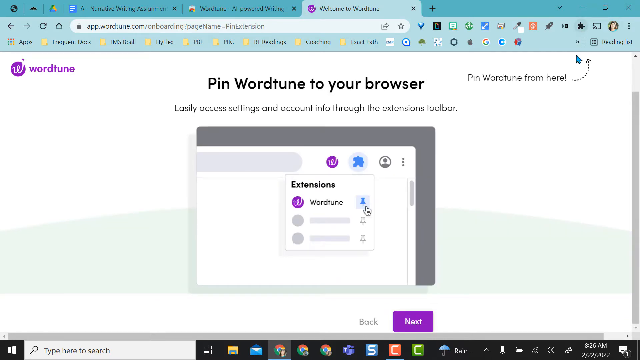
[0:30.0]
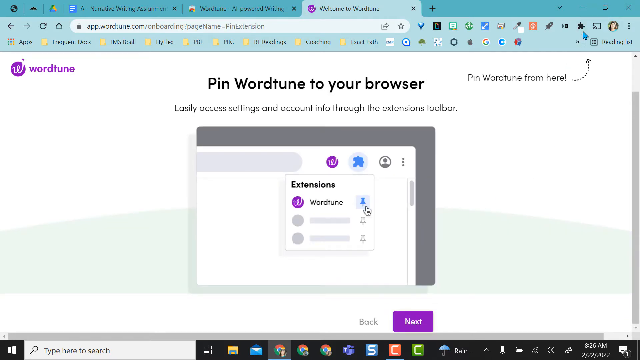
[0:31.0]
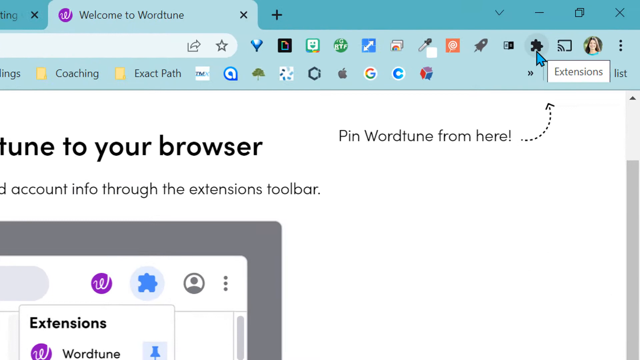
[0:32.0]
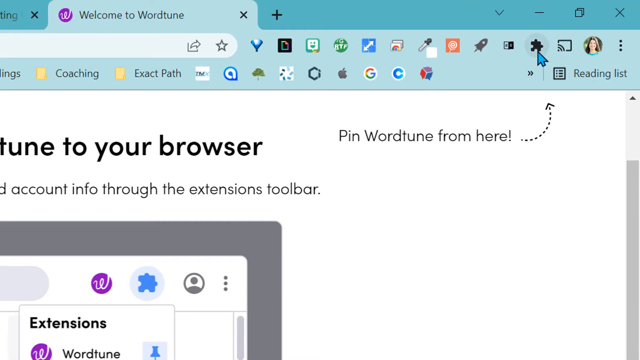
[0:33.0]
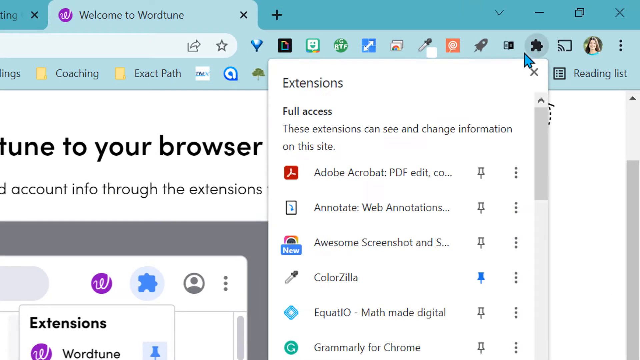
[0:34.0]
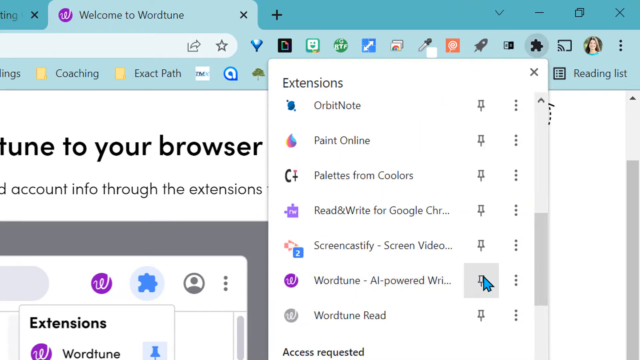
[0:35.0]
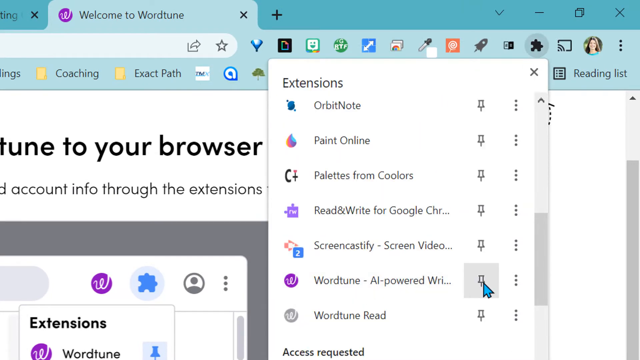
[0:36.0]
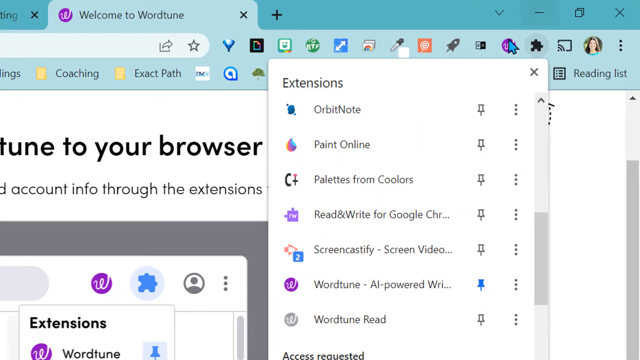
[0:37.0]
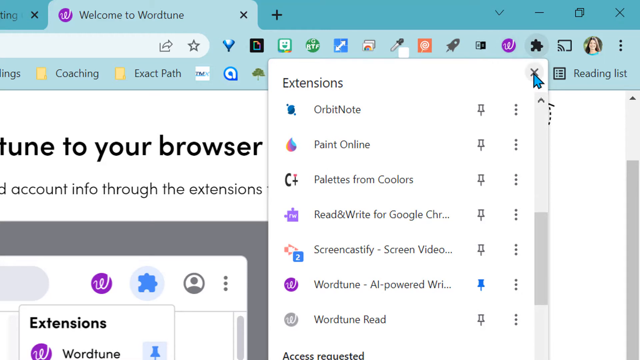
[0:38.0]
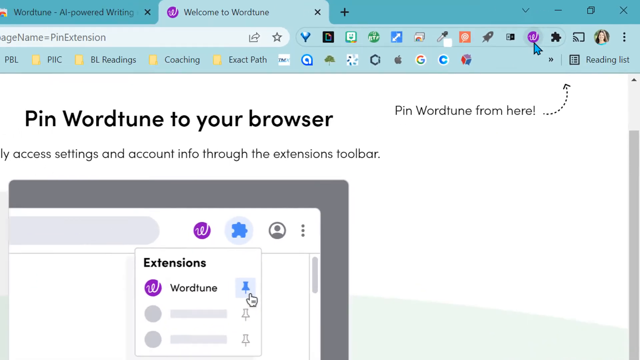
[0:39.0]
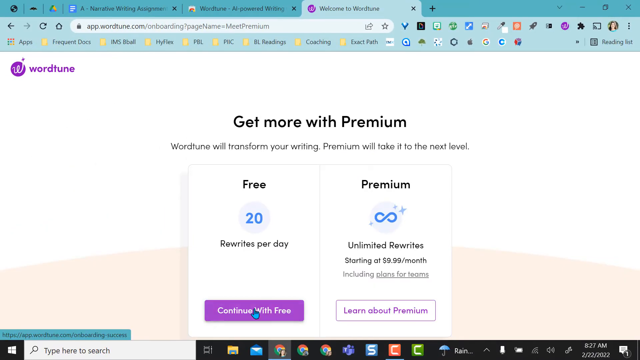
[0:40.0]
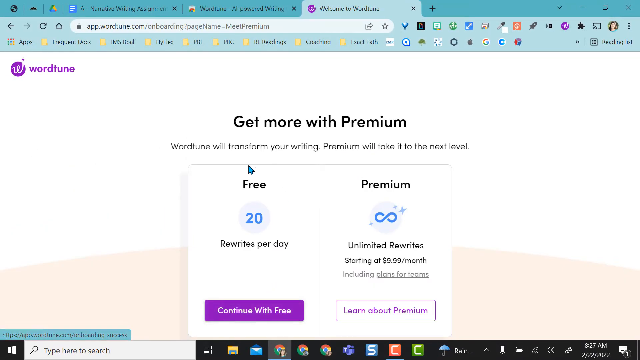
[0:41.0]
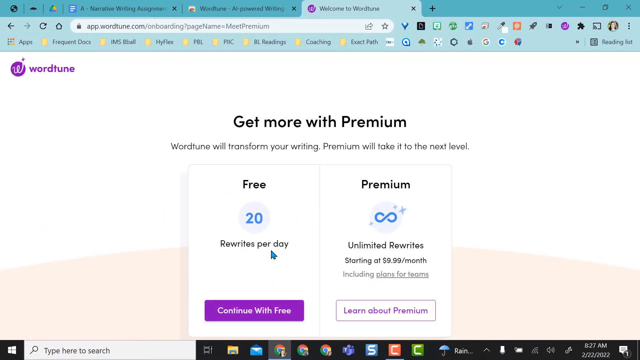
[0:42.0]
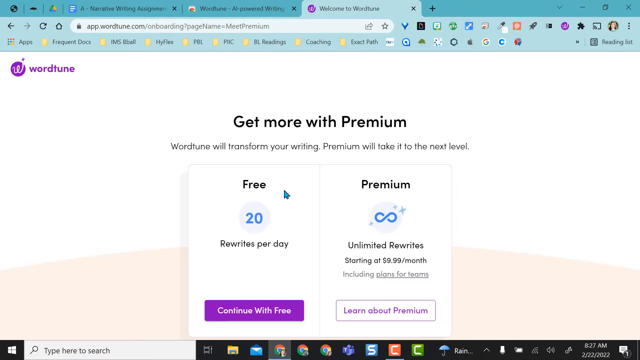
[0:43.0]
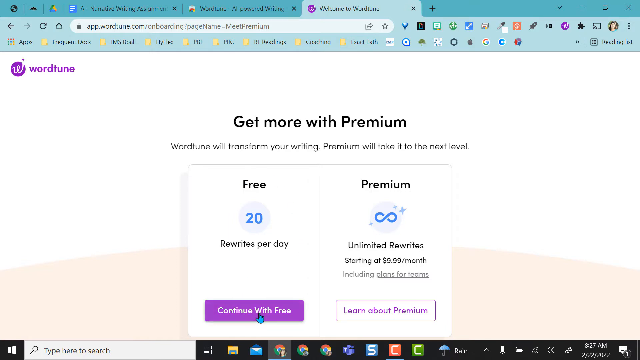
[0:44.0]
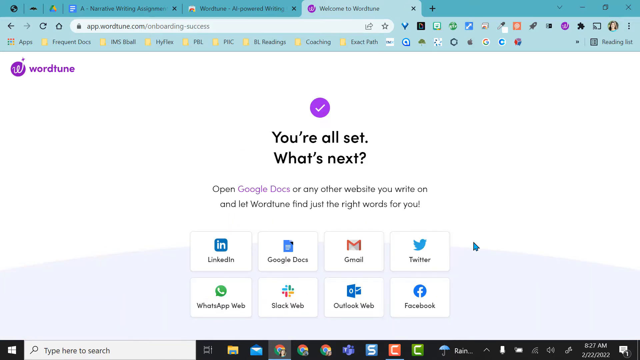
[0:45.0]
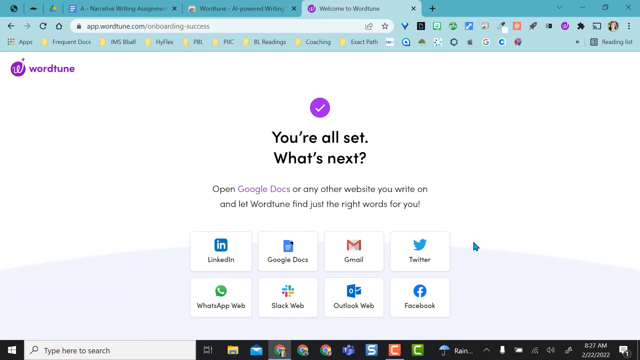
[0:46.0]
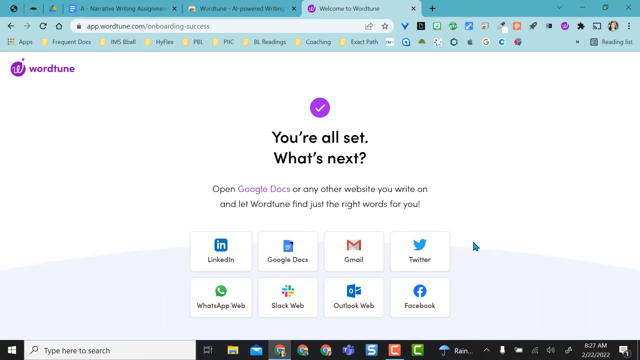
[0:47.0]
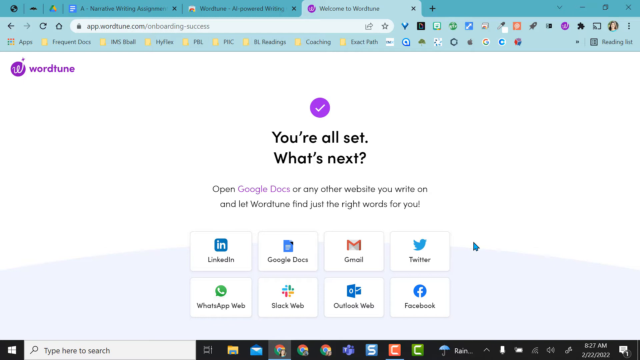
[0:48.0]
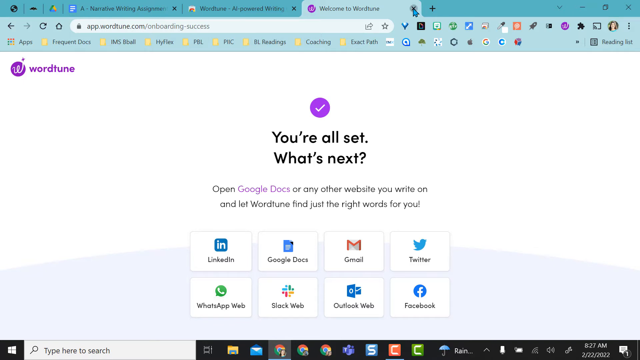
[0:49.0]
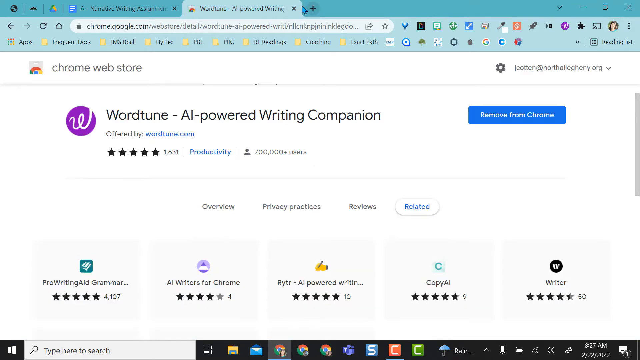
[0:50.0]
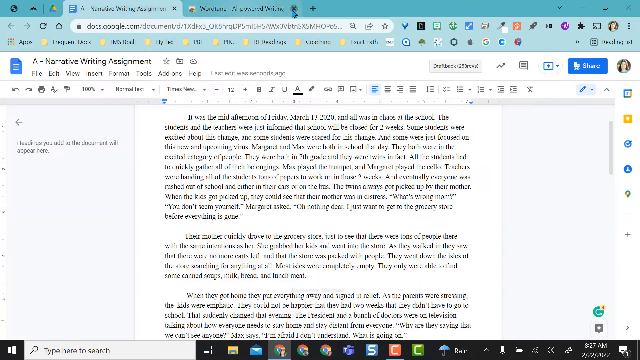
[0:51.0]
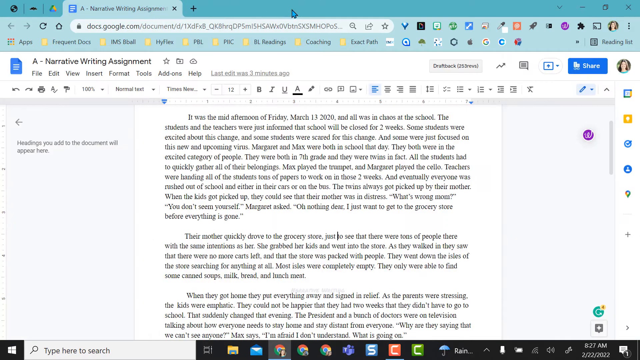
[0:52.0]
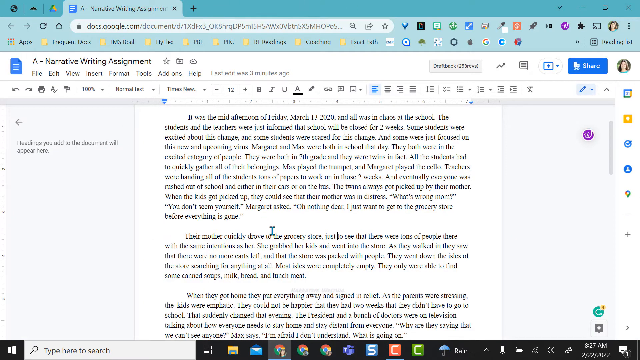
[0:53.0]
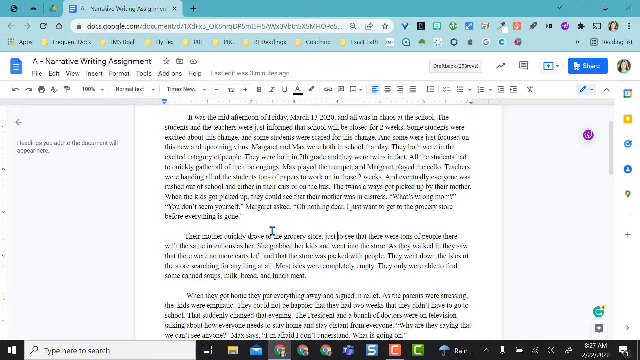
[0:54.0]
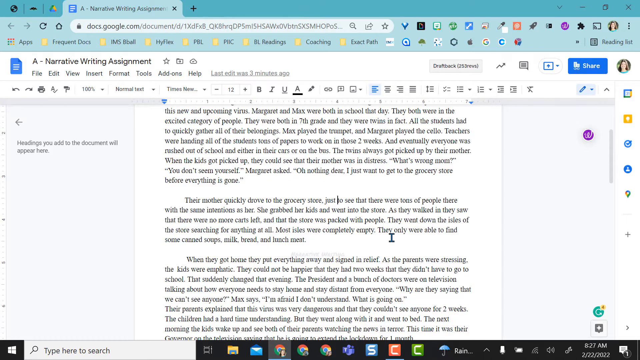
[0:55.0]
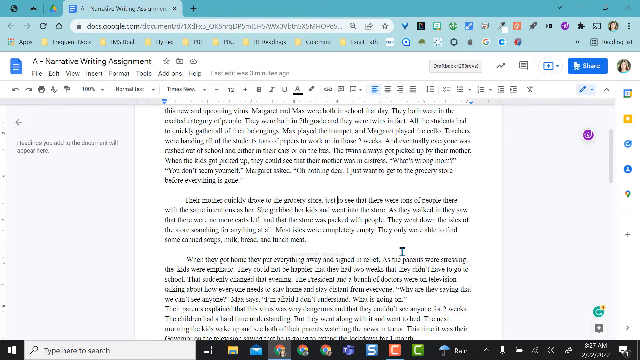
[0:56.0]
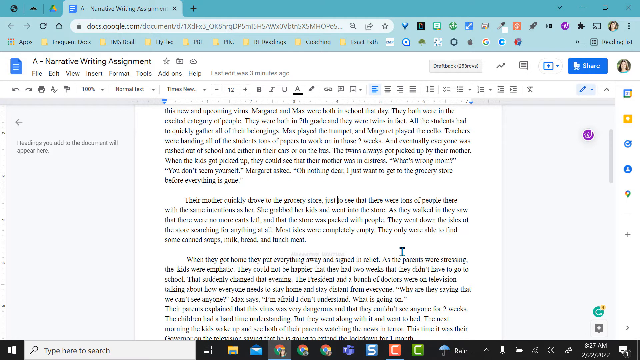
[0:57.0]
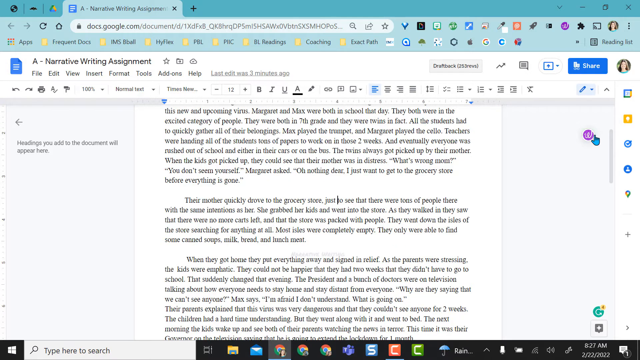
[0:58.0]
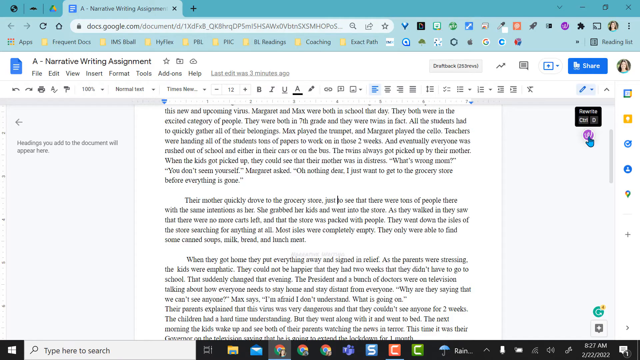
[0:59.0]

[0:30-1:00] A web browser is on a page for a Chrome extension. The user clicks on the extension icon in Google Chrome and scrolls down to show the WordTune AI Writing Assistant extension as installed. The user clicks the pin button, which makes the icon show in the browser's main page. The user then circles the free option of the WordTune extension: the free version gives 20 free rewrites per day, while premium offers unlimited rewrites for $9.99 a month. The page then shows a statement saying "you're all set, what's next" and highlights how the extension can be used in further activities. The user closes the extension tab, and the document becomes the main focus. It has three main paragraphs, and with a click of a button, areas that can be improved are shown.